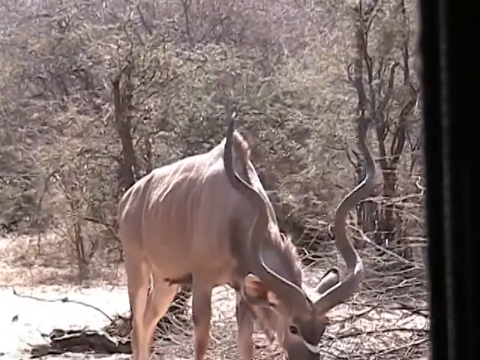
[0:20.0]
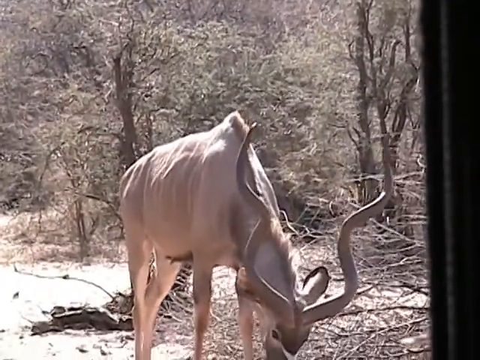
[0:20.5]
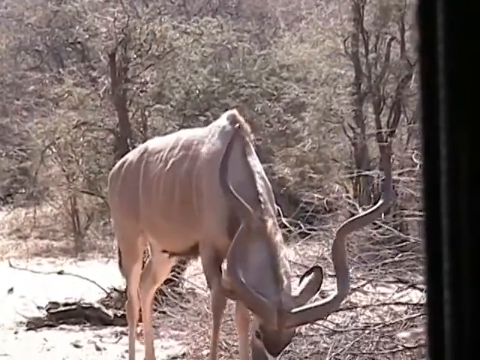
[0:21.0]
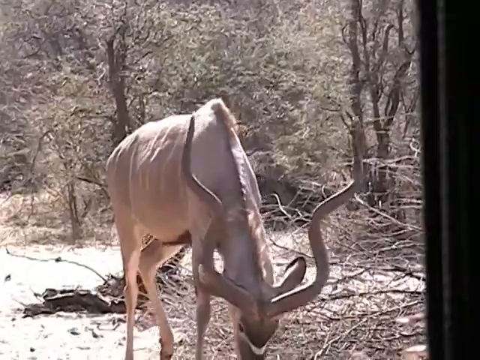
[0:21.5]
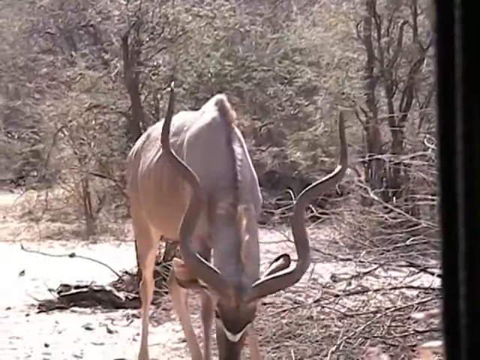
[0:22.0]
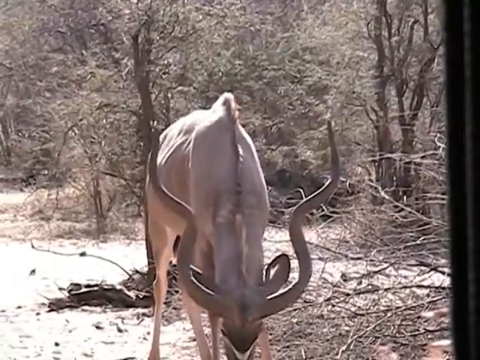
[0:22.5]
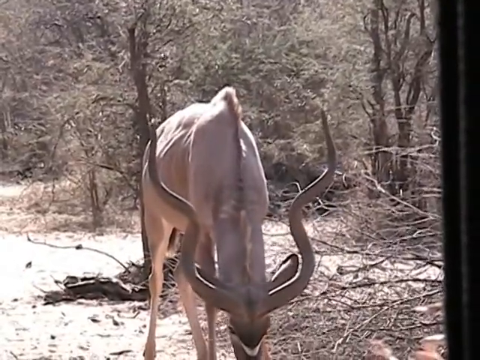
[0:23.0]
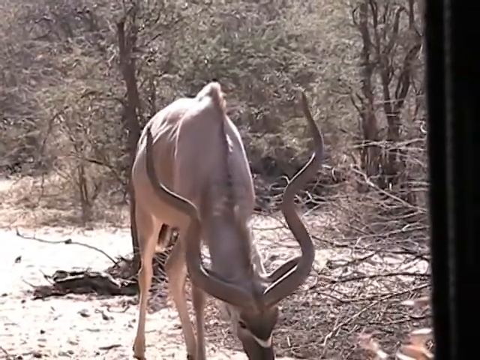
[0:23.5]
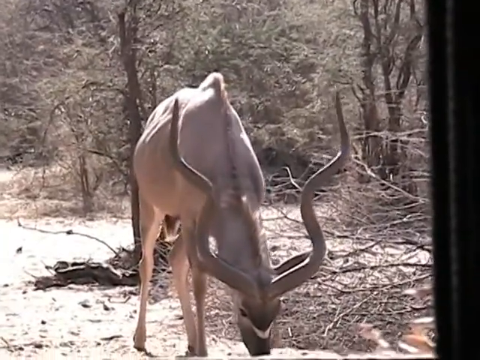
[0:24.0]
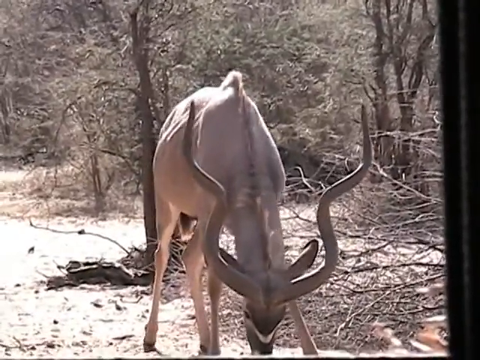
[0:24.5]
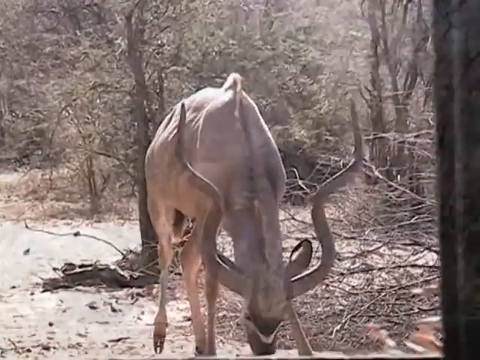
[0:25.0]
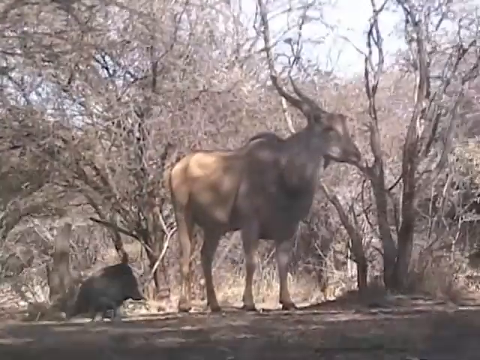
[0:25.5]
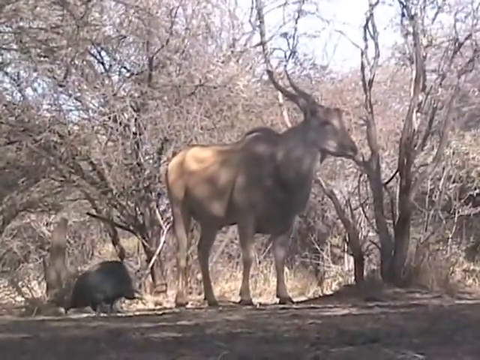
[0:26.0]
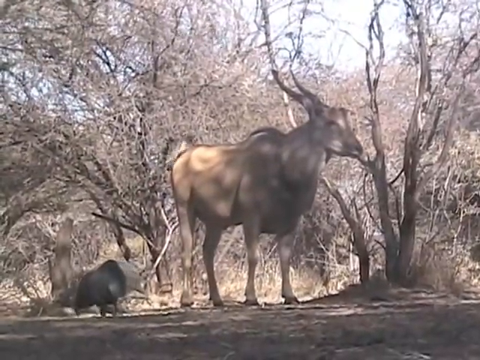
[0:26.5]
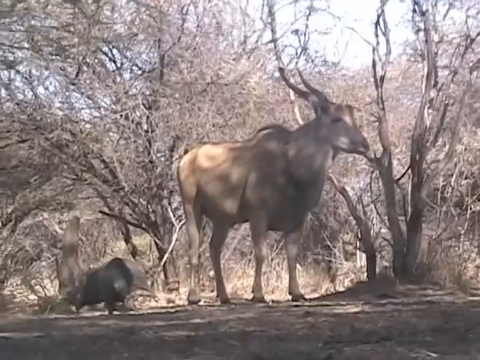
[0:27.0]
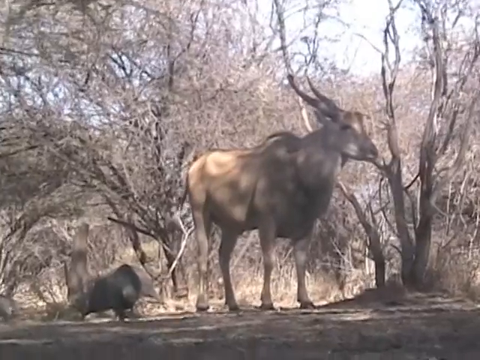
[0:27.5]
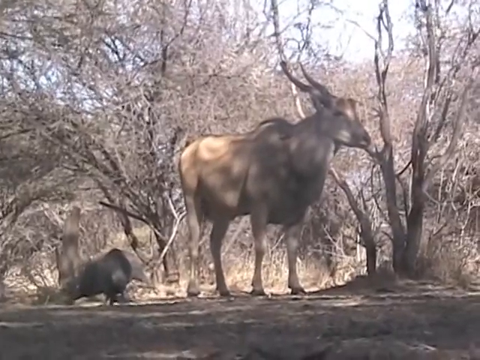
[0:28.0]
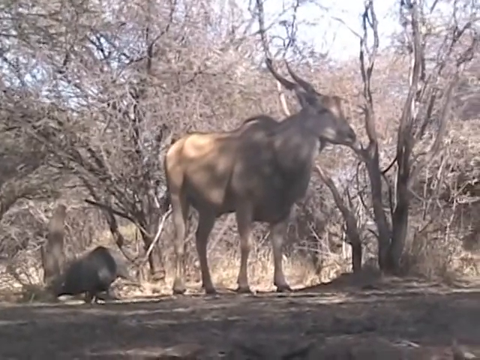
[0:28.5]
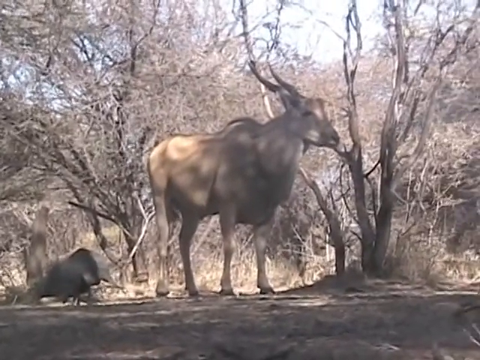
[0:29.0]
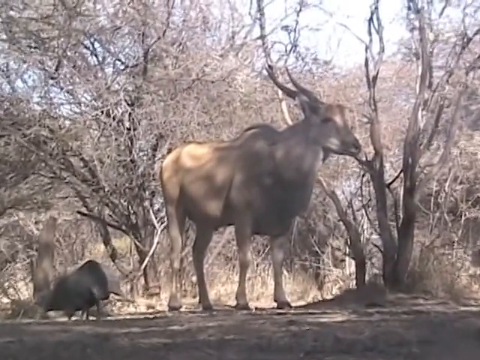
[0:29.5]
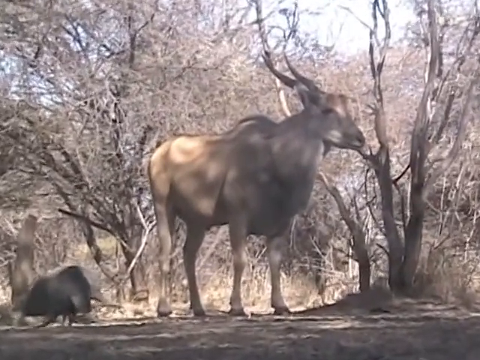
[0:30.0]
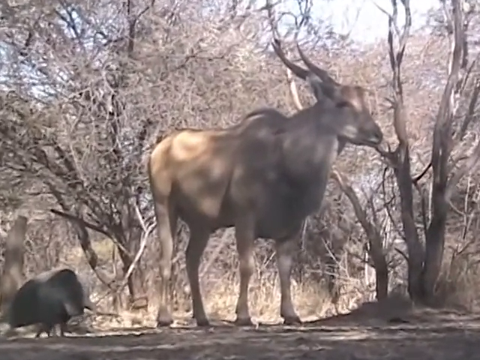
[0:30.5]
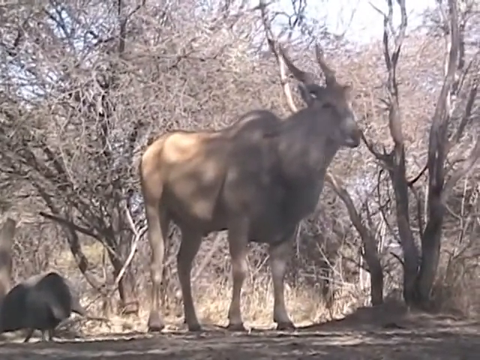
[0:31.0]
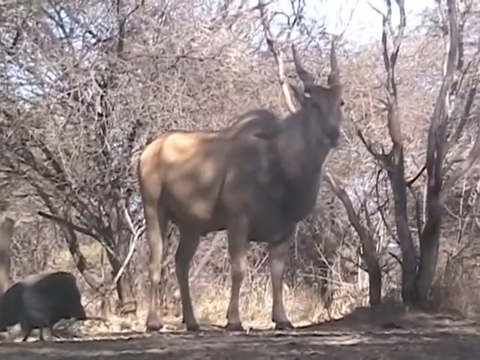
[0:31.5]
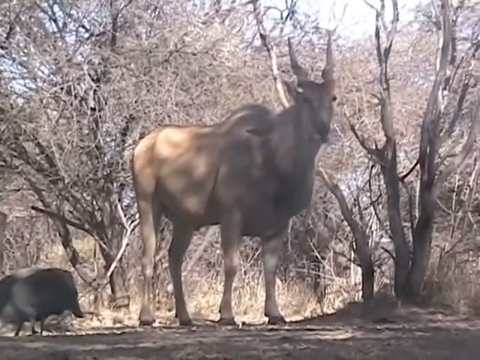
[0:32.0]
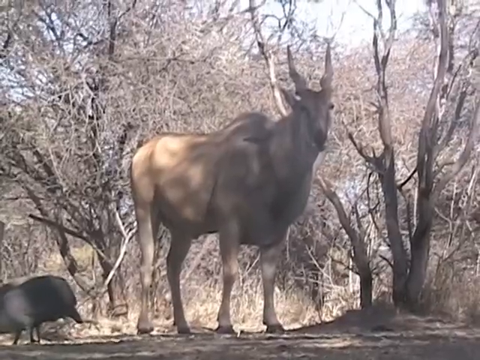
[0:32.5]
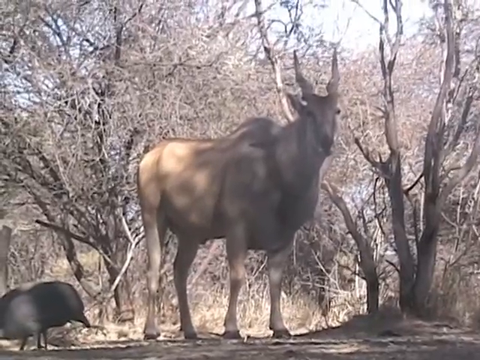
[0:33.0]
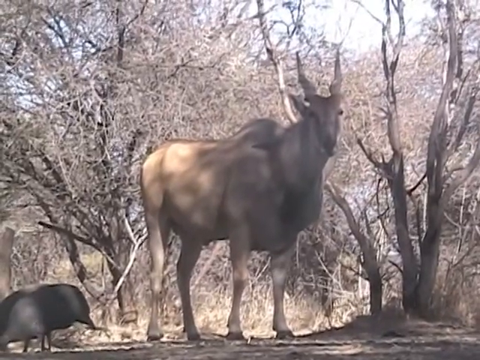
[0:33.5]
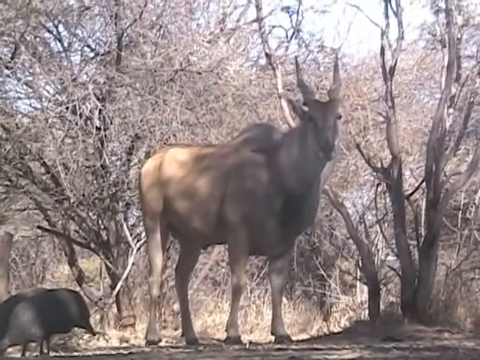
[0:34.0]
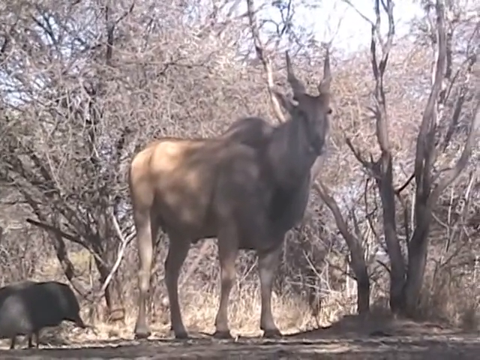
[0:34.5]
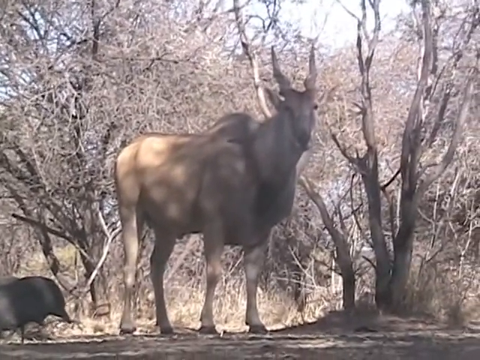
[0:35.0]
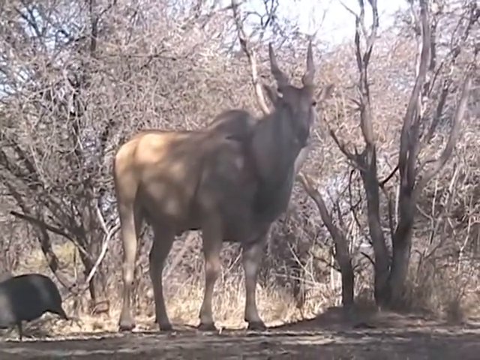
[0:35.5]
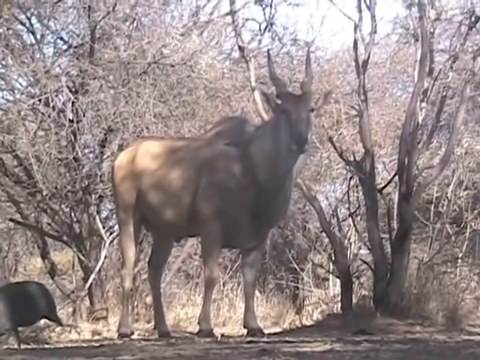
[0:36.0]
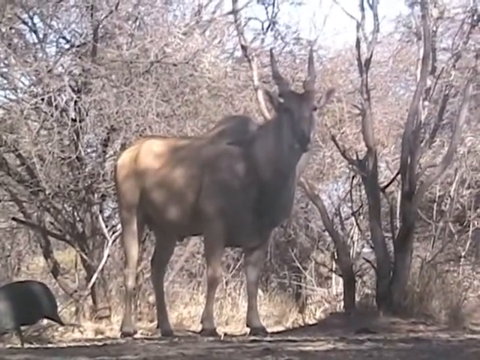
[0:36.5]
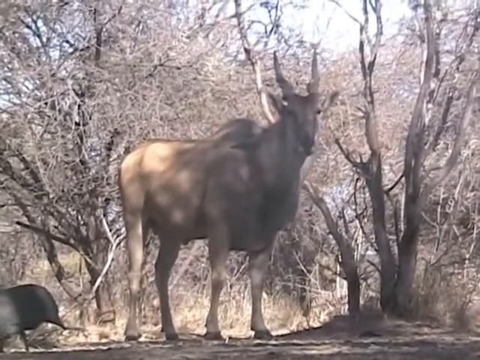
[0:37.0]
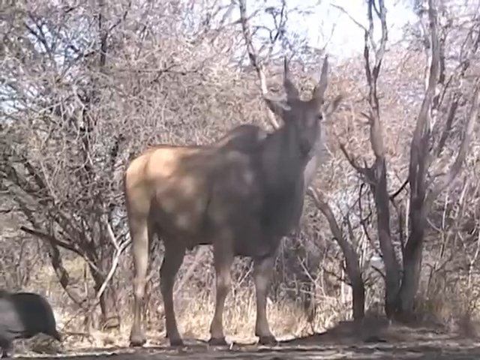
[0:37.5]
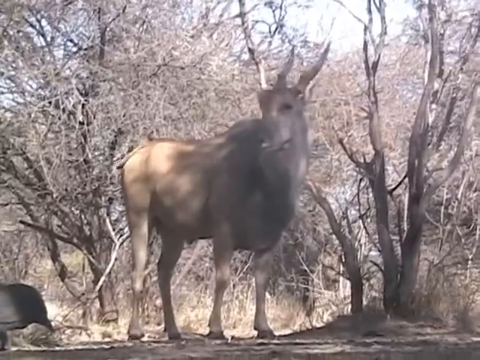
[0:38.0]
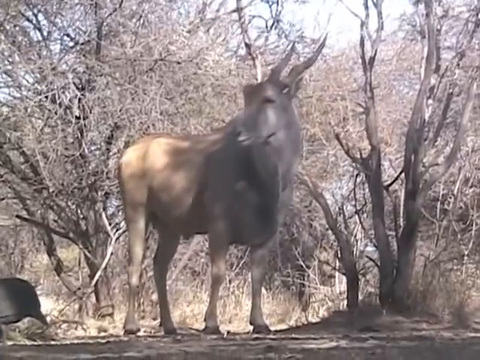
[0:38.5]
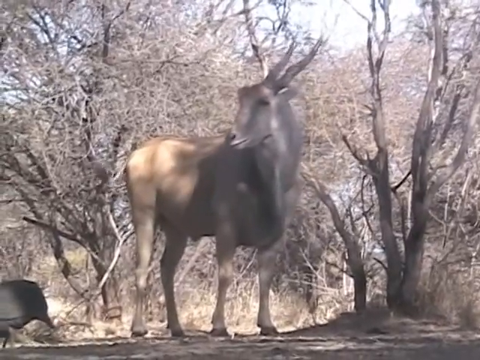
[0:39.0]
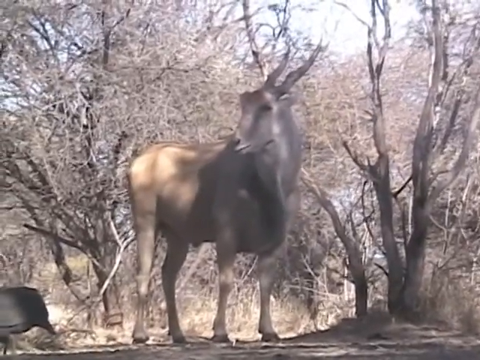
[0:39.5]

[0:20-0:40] The springbok starts drinking from something off camera, so what it is drinking cannot be seen. The surroundings are very rural and look to be outback, with lots of trees and shrubs surrounding the springbok. The video then fades to footage of another springbok, stood upright and staring off into the distance, again surrounded by wilderness, with different trees and bushes. To the bottom left of the springbok there is a much smaller animal, some sort of bird. The animal then turns and stares at the camera before turning its head to the right, wagging its tail. The springbok puts its ears up as if listening to something, and then the video moves to a different image. The day is bright, with a very white hue that can be seen poking through the bushes and trees. Part of the springbok is in shadow, with its rear end in the light.